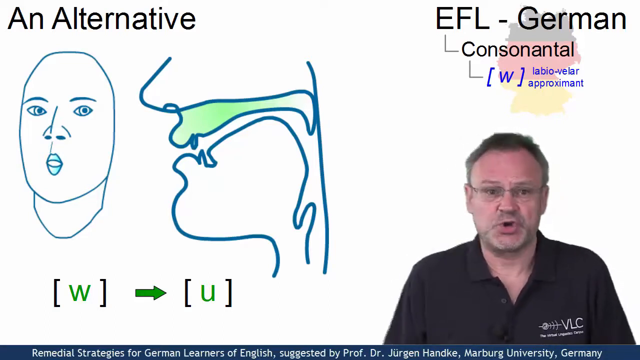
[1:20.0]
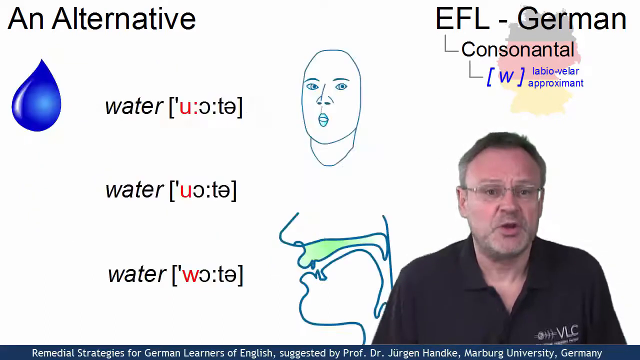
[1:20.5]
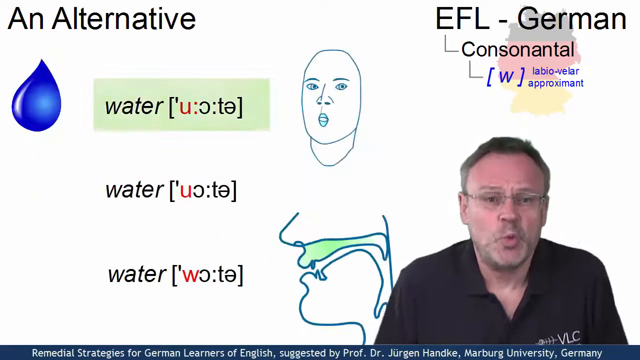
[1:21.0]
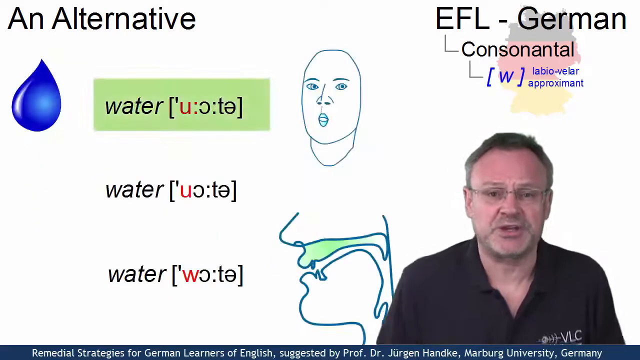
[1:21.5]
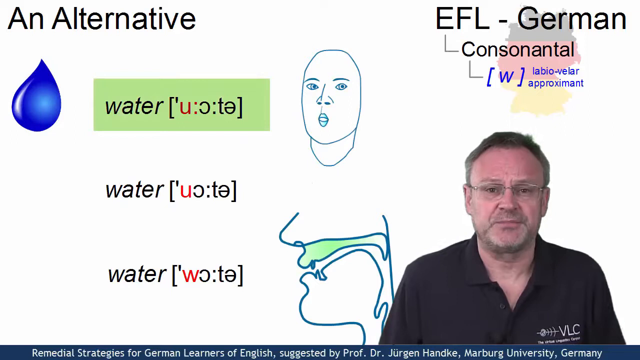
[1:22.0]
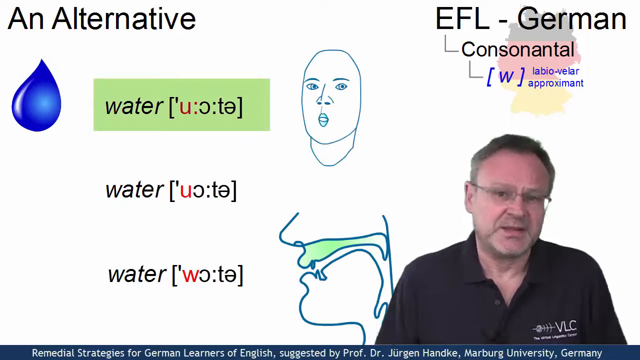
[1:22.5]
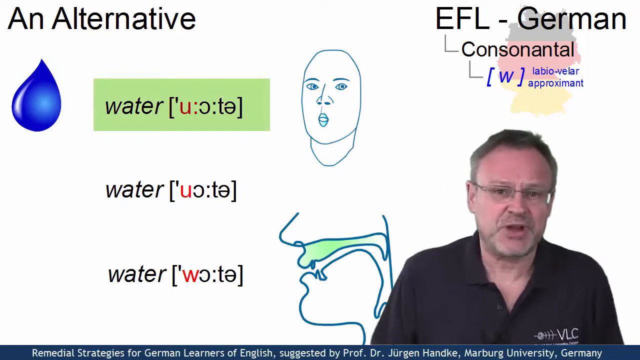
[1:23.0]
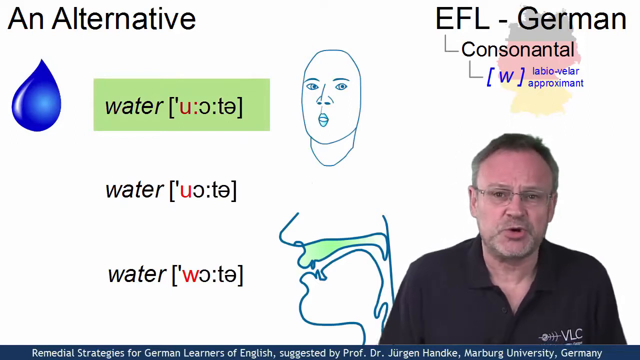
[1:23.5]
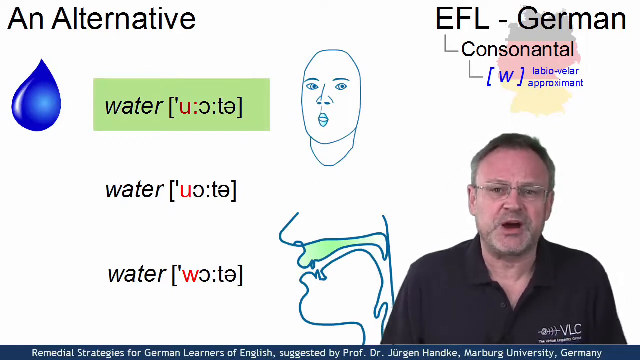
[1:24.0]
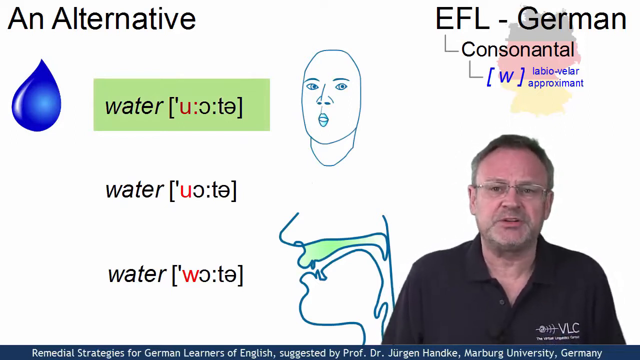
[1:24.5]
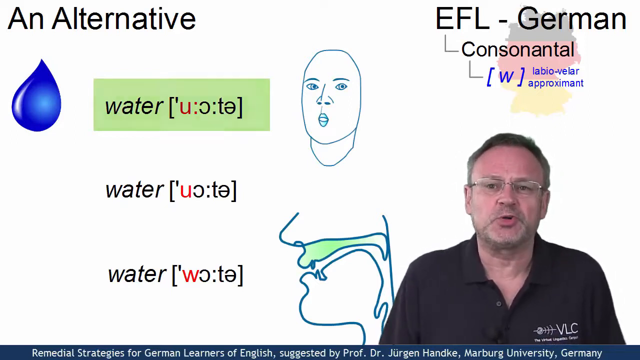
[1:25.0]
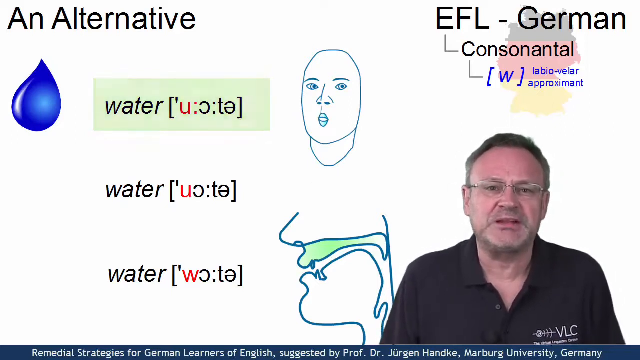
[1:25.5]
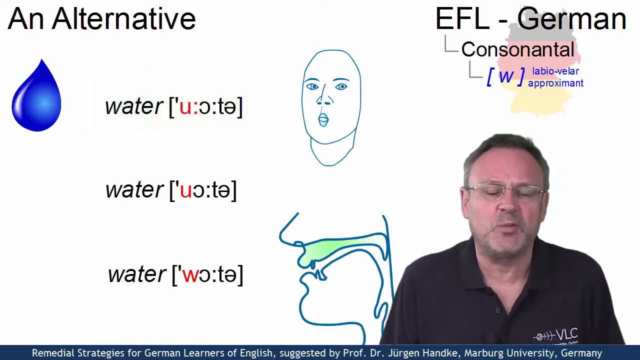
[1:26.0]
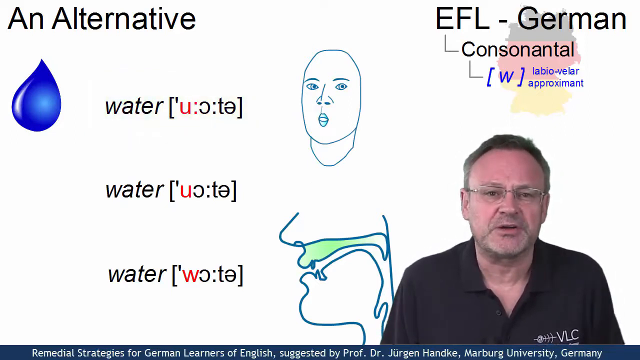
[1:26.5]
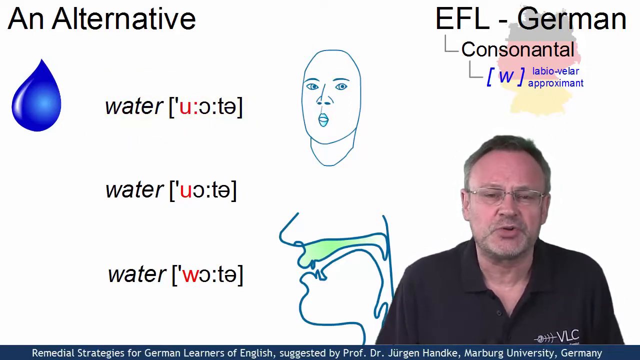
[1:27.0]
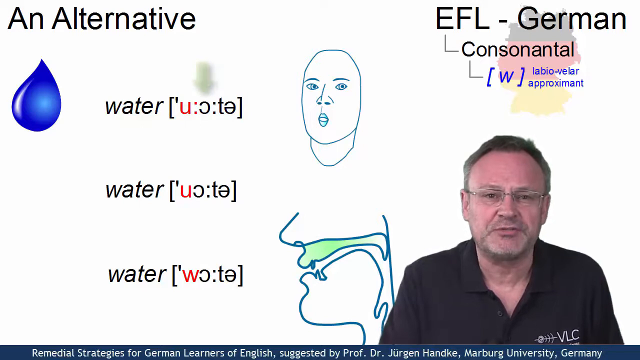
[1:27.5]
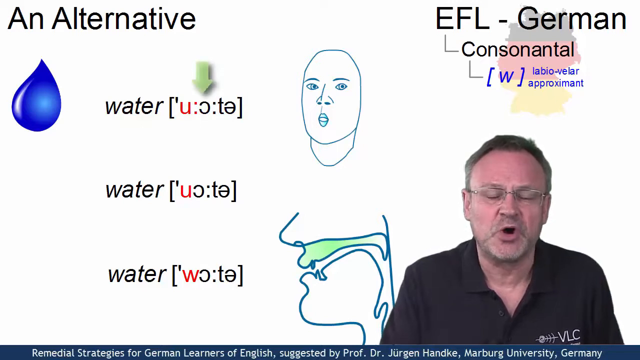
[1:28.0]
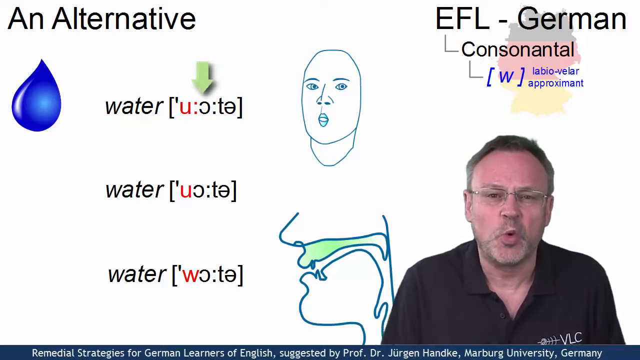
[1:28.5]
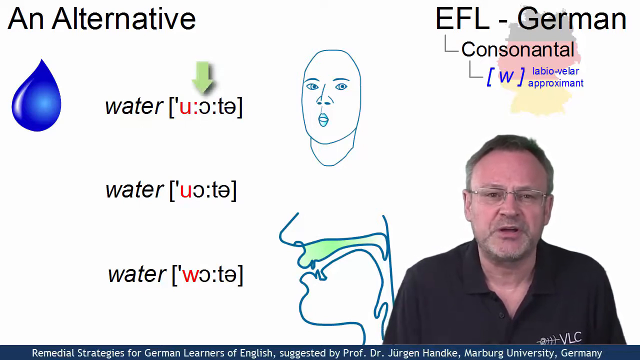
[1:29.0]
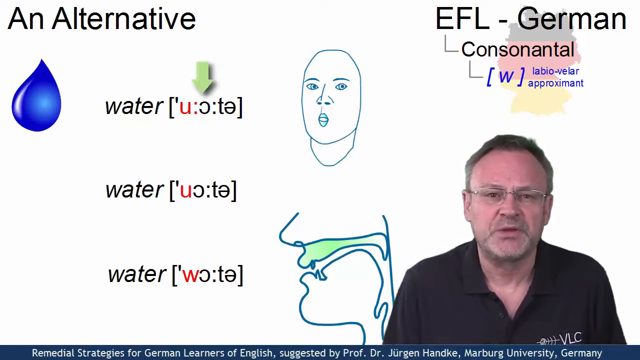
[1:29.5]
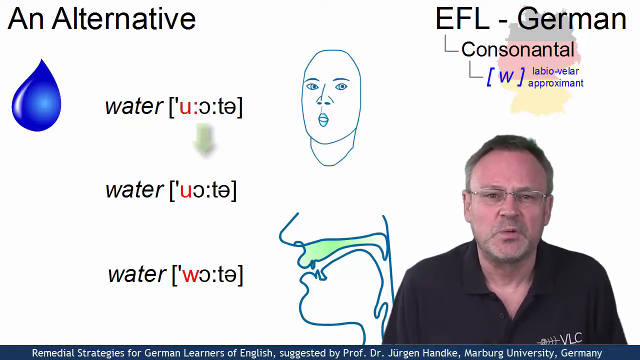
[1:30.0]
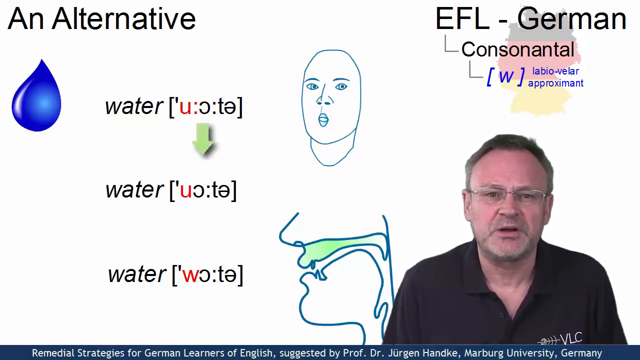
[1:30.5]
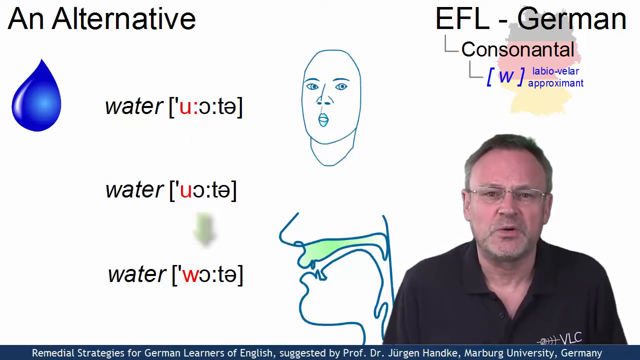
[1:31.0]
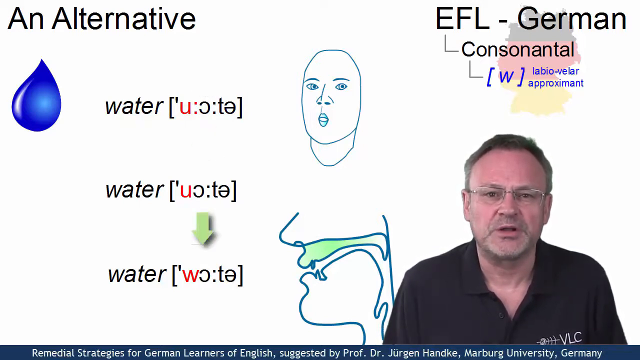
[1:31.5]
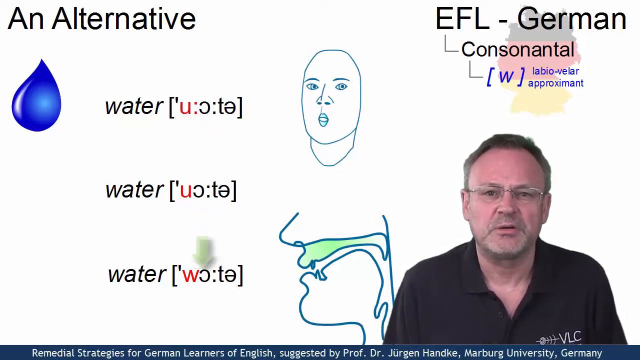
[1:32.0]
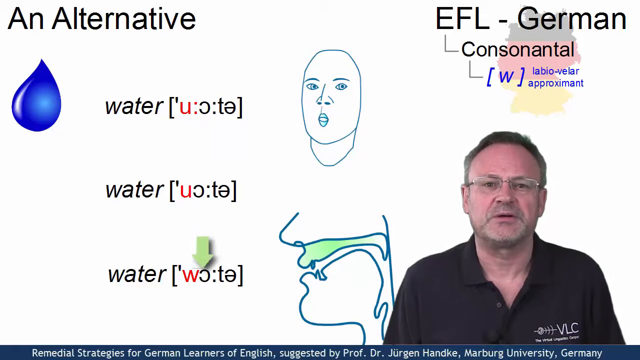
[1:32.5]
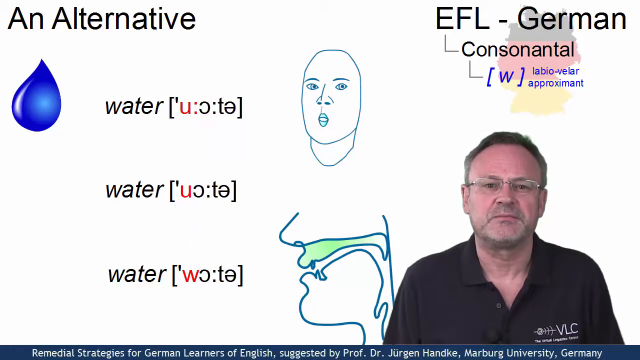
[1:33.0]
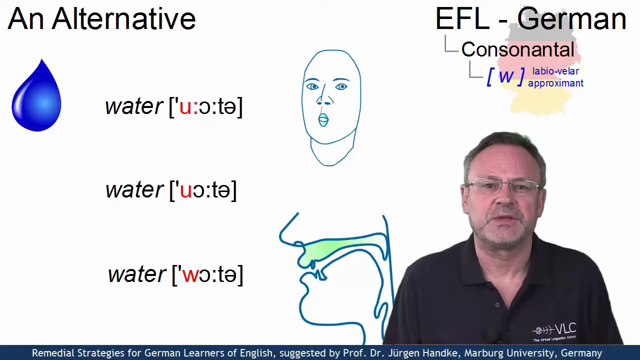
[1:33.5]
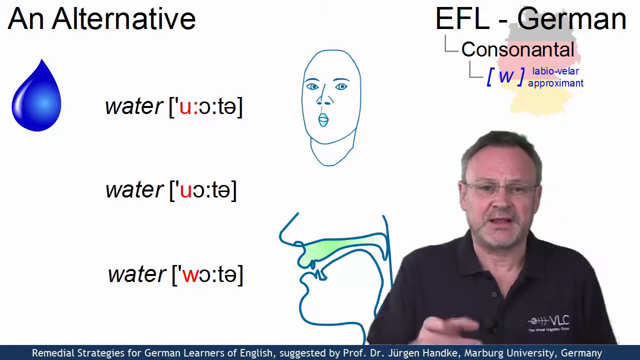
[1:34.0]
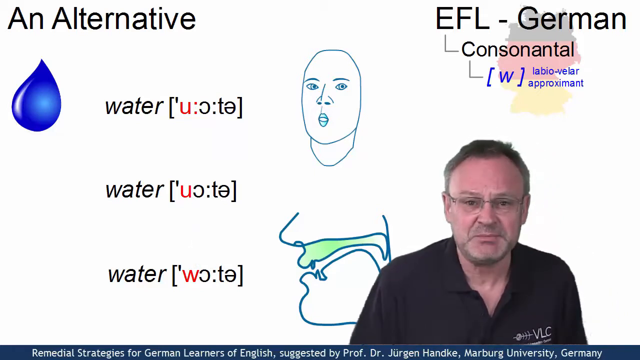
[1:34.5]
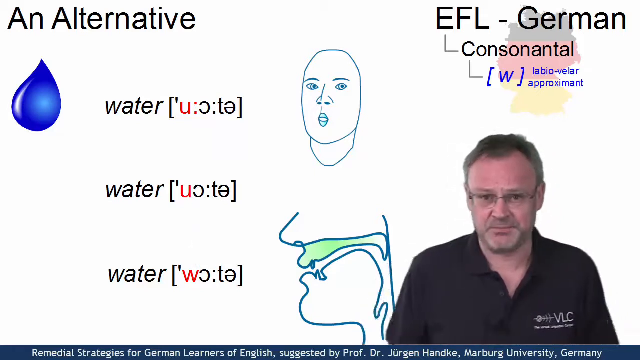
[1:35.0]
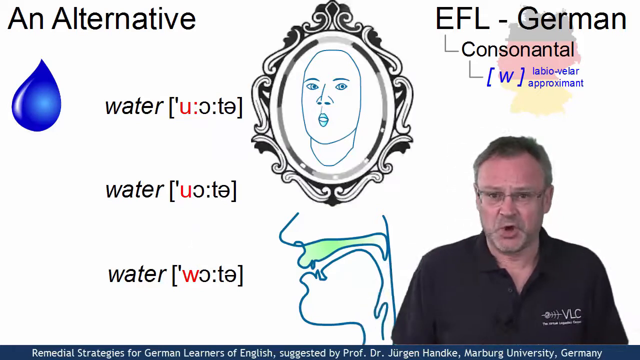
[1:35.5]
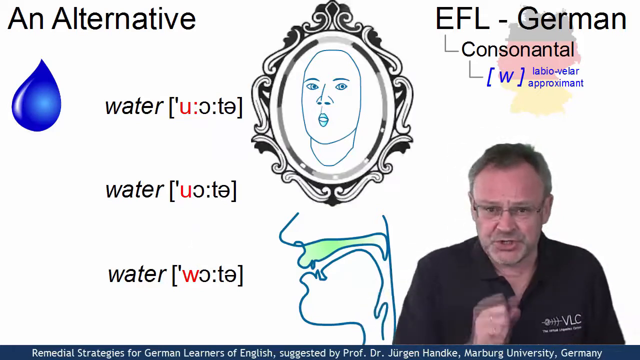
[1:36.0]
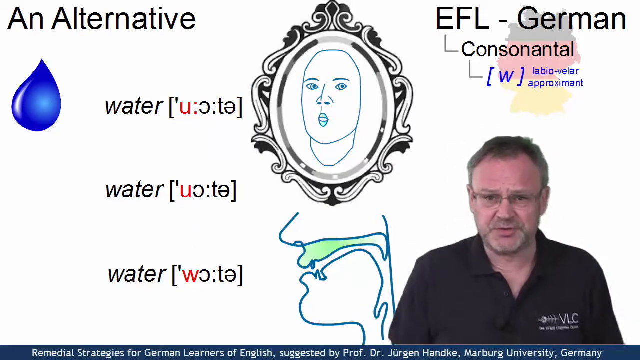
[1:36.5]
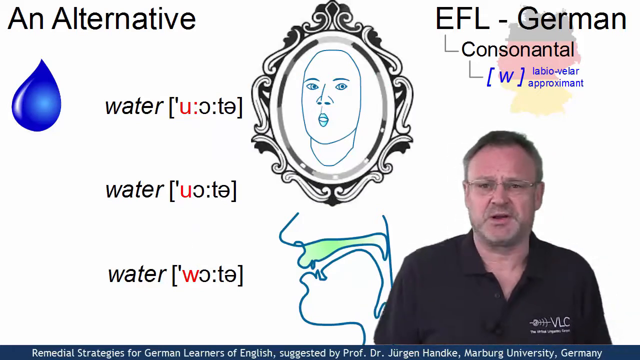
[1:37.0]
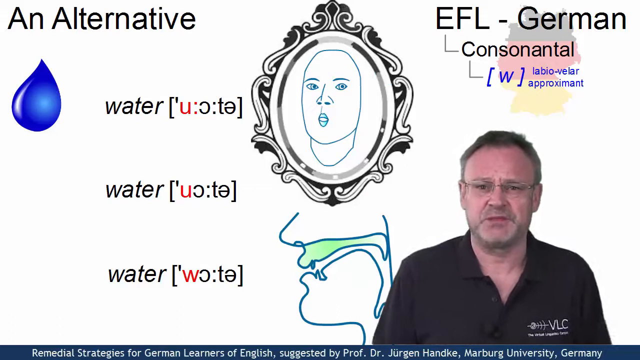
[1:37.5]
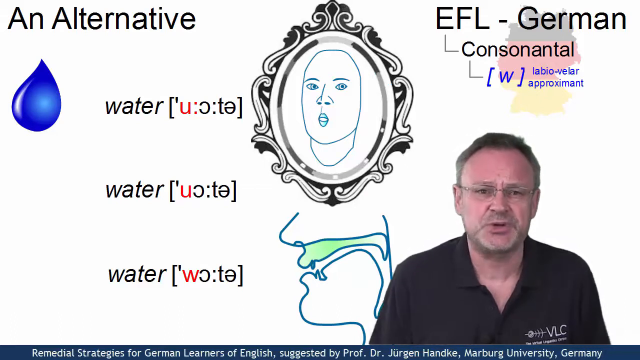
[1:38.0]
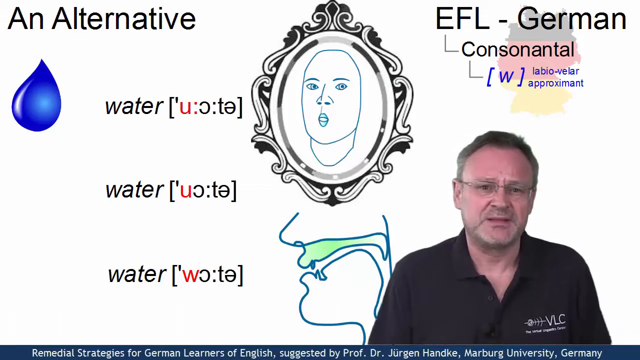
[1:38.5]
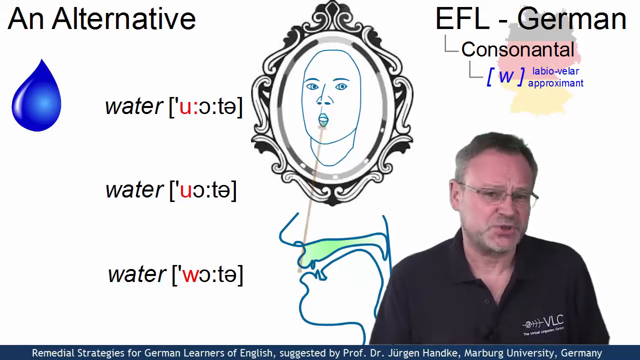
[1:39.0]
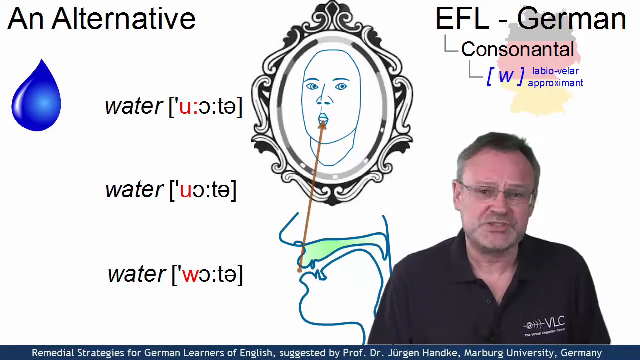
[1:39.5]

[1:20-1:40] The man talks more passionately, making a "wuh" sound with his mouth for water. He points at a backwards C that appears in all the words. The mouth shape on the person's face is simple, with open, unpursed lips, and he shows how water can be said in different ways with the mouth in a certain position.